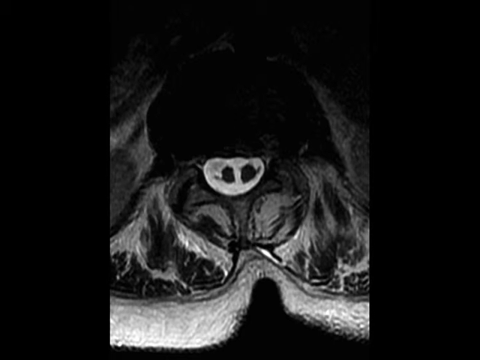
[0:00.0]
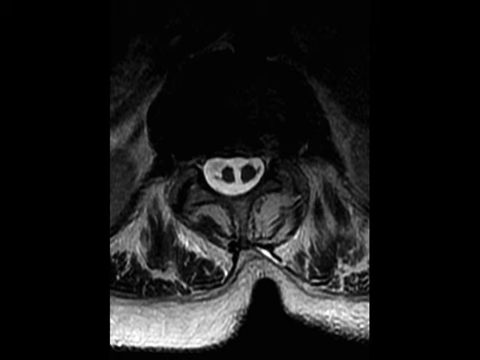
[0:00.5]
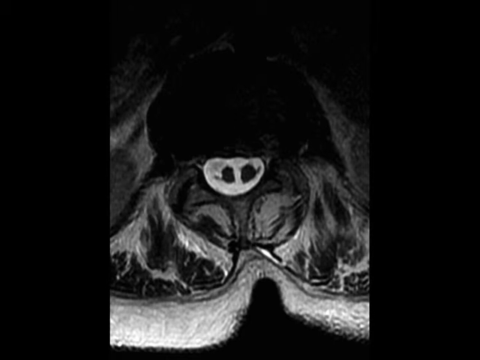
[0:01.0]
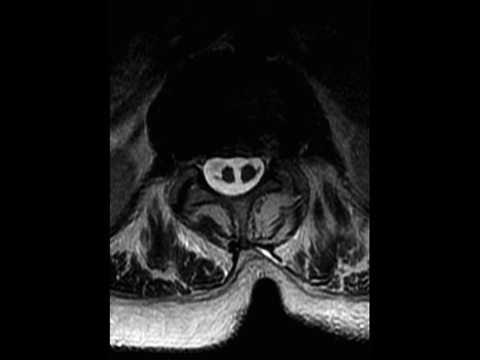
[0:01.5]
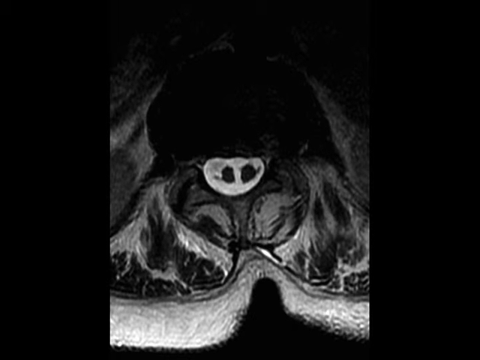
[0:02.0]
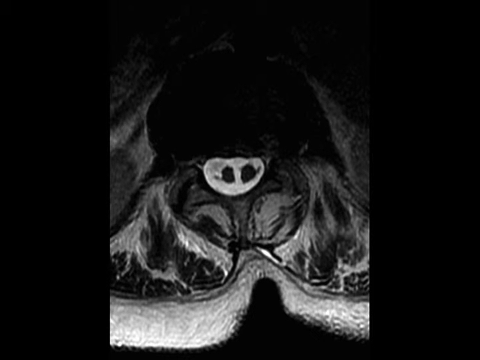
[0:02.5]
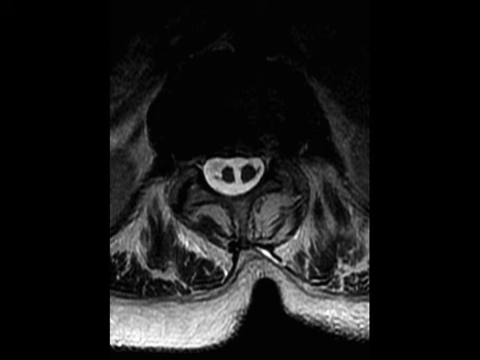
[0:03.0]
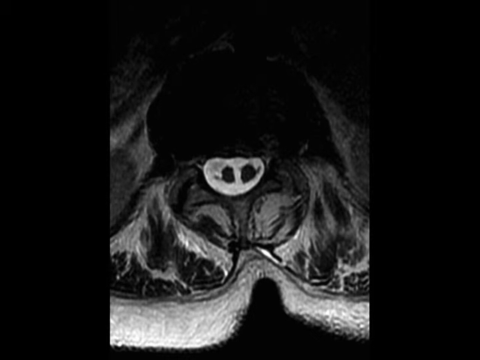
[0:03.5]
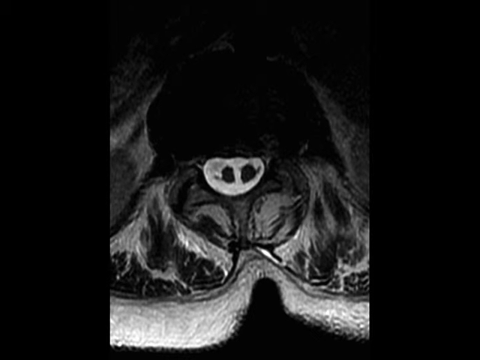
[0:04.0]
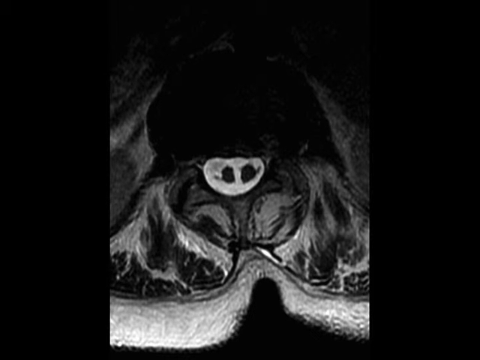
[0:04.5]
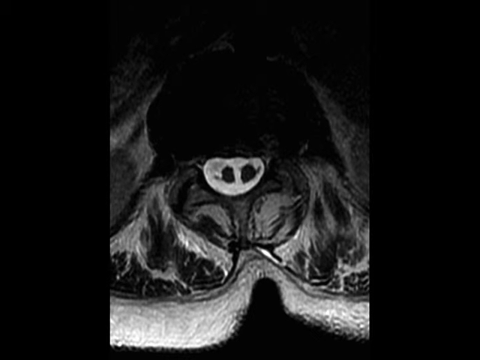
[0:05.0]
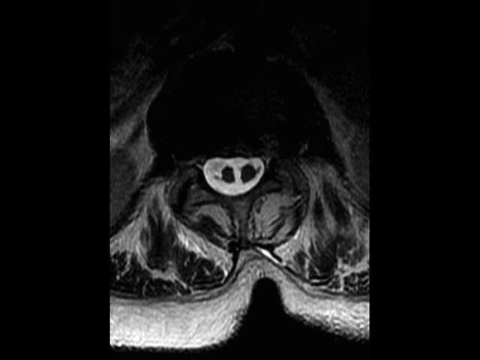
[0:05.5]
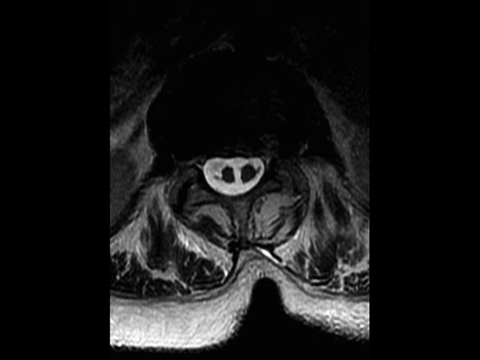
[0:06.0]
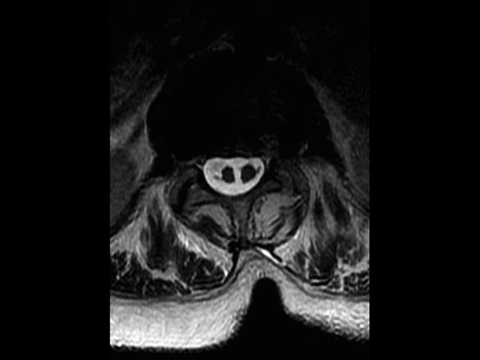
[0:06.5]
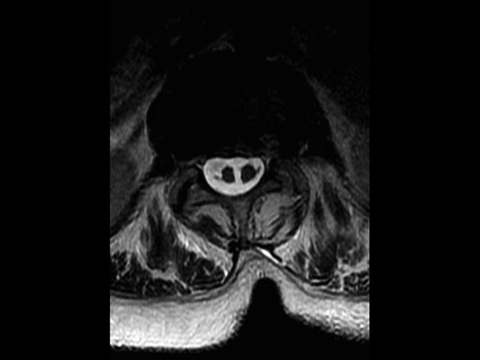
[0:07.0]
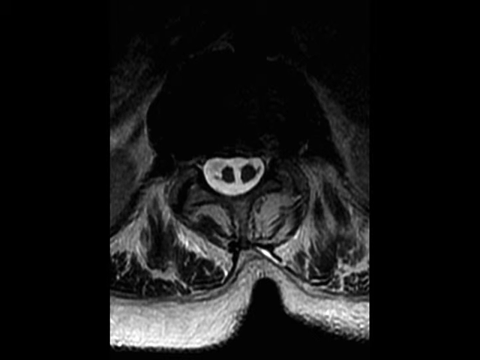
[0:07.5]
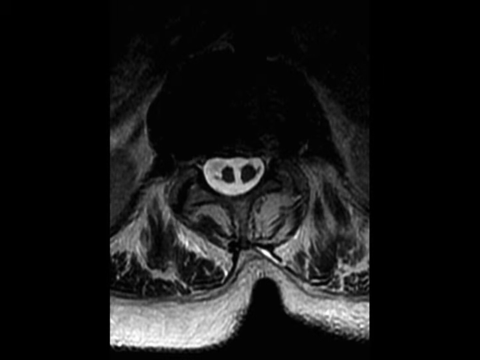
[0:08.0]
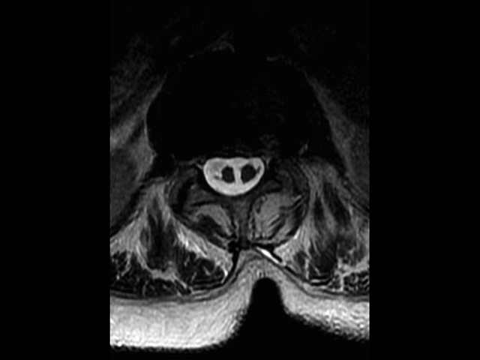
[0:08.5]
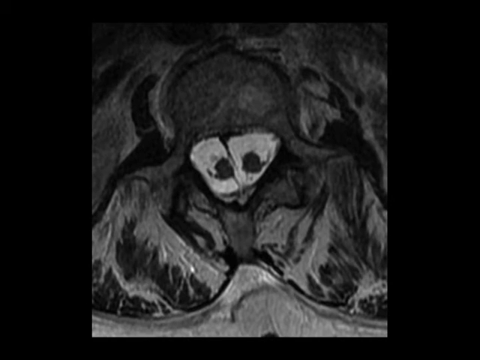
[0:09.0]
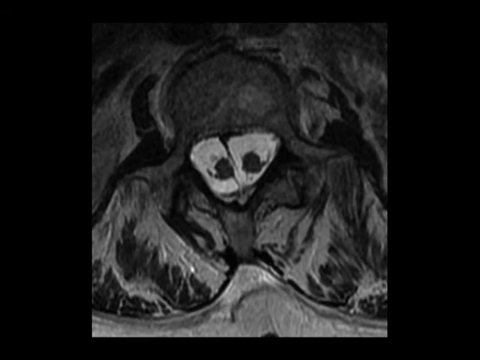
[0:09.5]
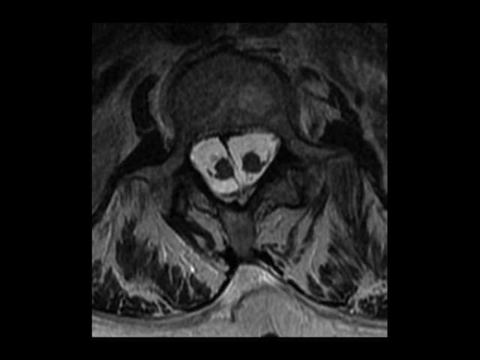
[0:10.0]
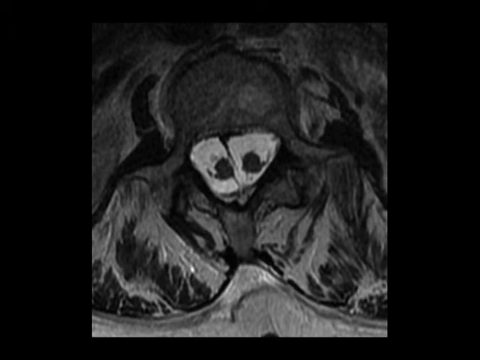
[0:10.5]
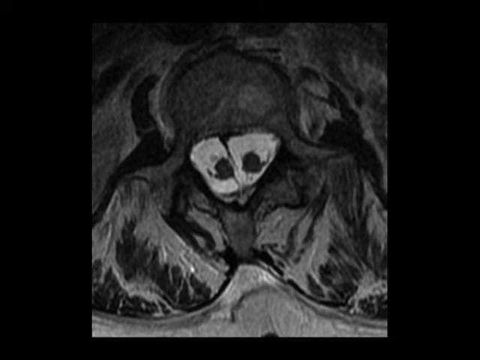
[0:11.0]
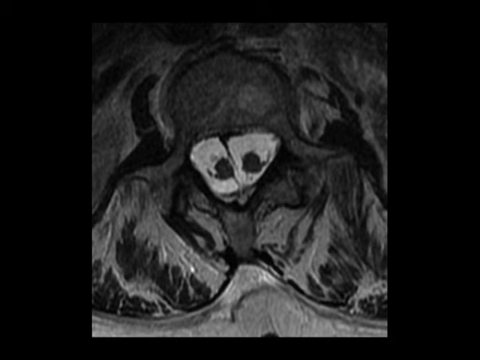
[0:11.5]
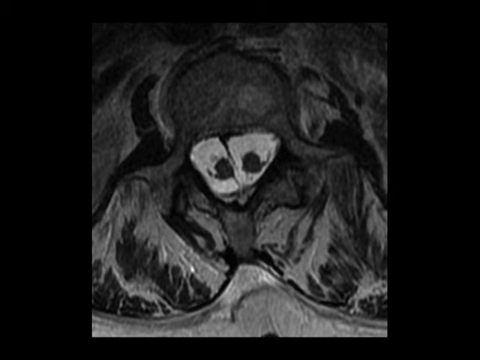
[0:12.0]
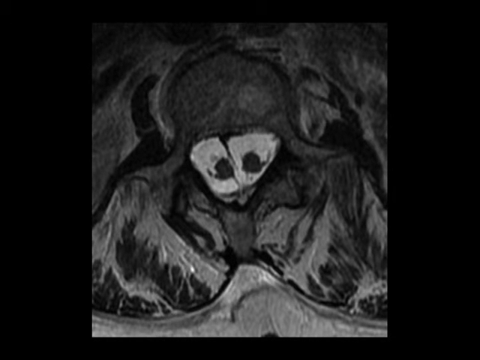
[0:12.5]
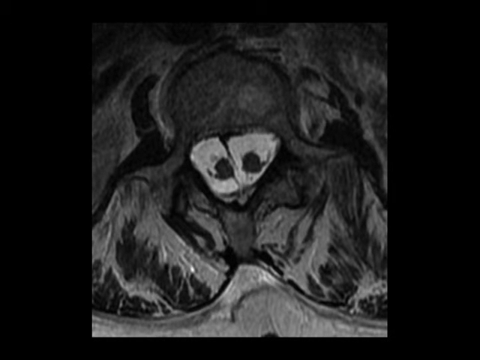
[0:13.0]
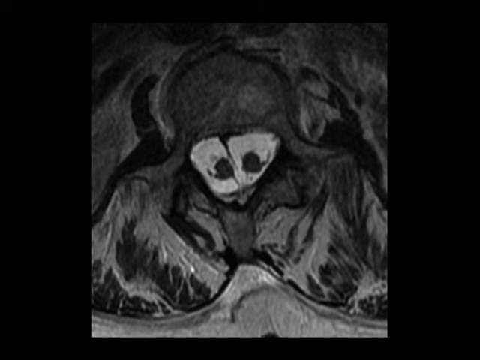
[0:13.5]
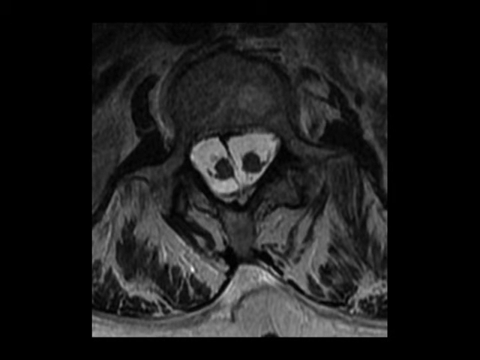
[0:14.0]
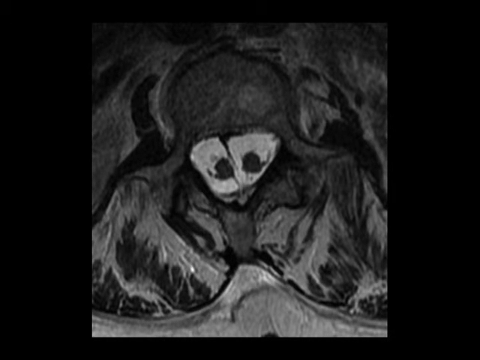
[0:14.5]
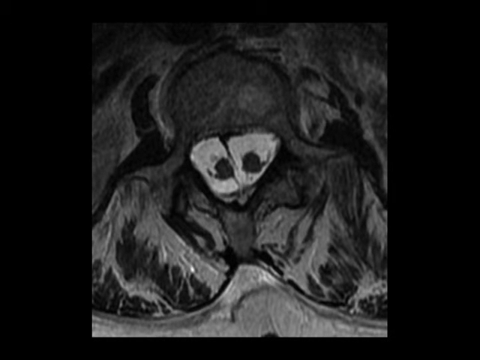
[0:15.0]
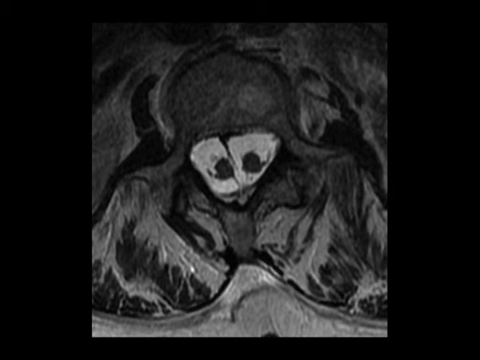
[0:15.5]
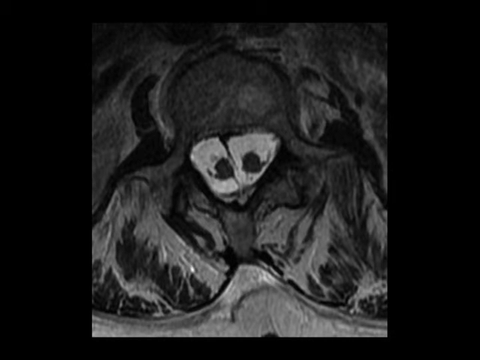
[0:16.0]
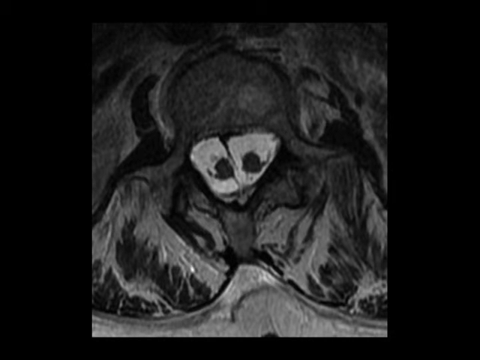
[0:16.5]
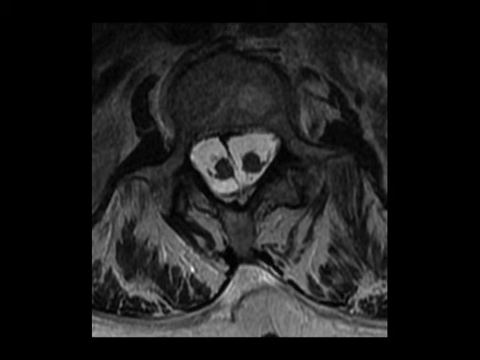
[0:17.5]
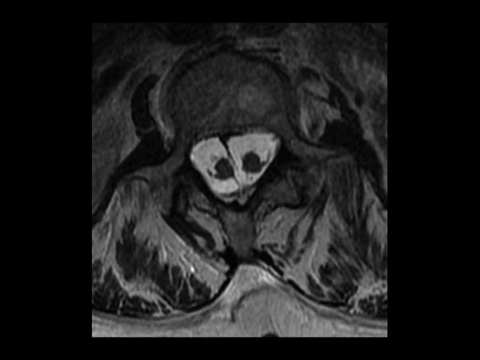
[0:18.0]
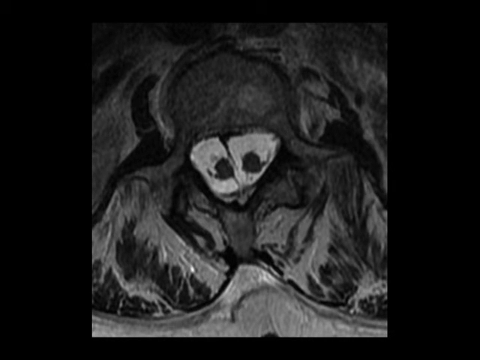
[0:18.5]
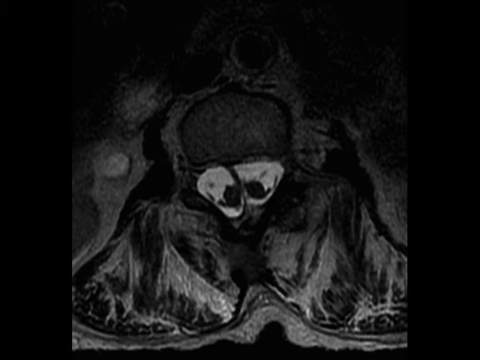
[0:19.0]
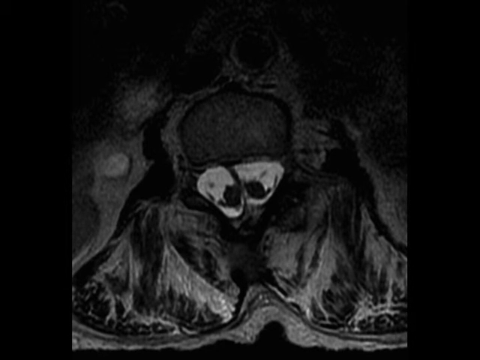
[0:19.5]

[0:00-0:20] A black and white x-ray is taken from above a person's spinal cord, showing the entire width of the body from the back to the front, from the back to the chest. The view looks down from above, and the left and right sides of the body are not visible. The image is static, with no movement of any body parts and no animation. Partway through, the view zooms in around the spinal column, and toward the end it zooms out again to the larger image of the spine. Apart from the zoom in and zoom out, there is no movement.